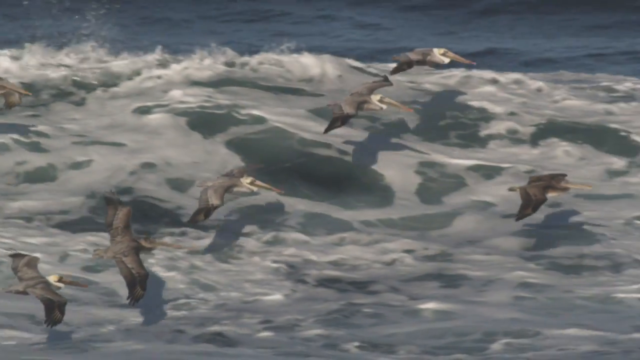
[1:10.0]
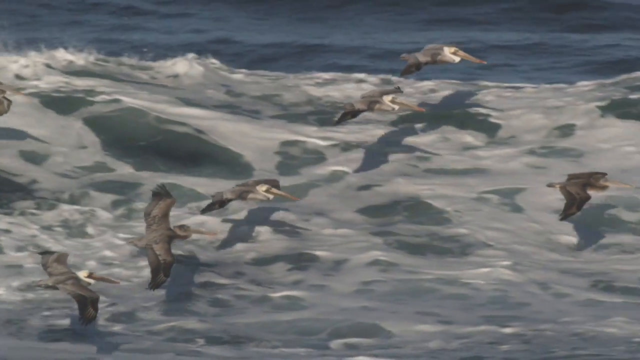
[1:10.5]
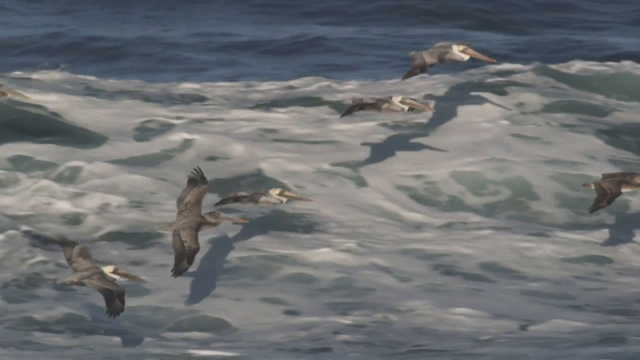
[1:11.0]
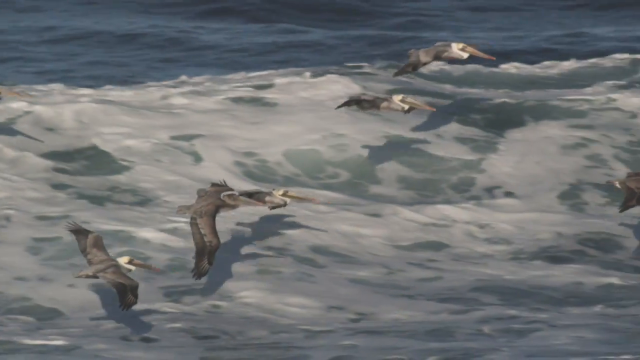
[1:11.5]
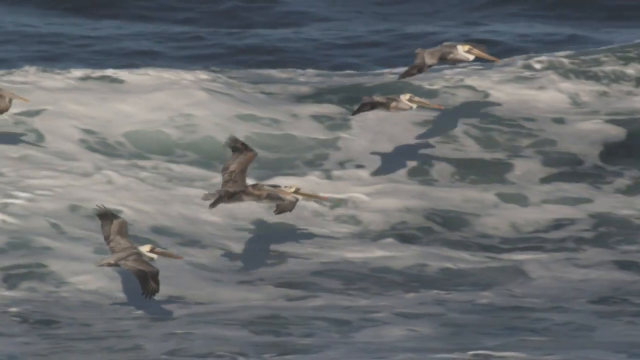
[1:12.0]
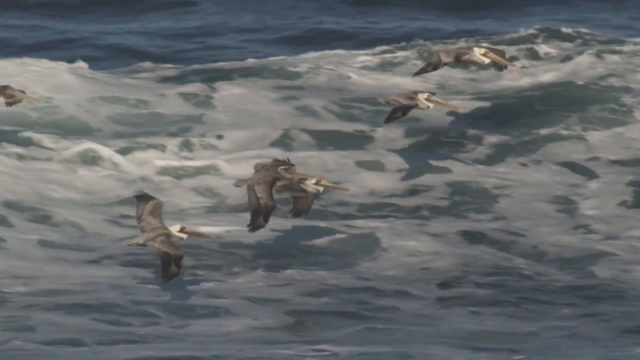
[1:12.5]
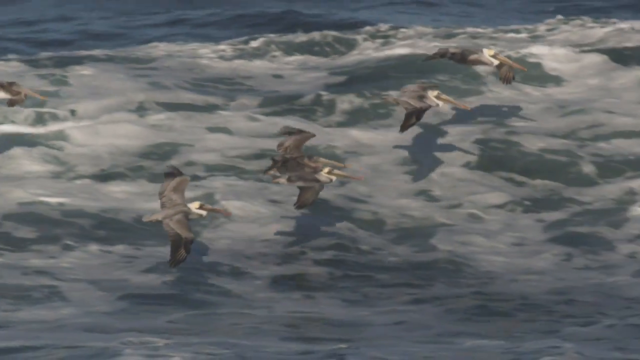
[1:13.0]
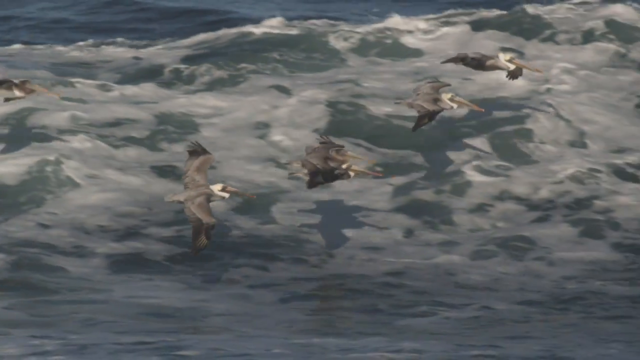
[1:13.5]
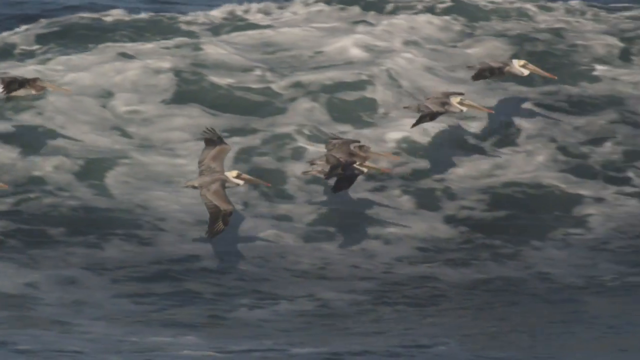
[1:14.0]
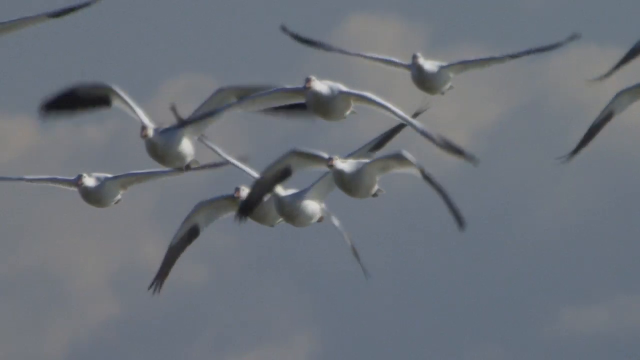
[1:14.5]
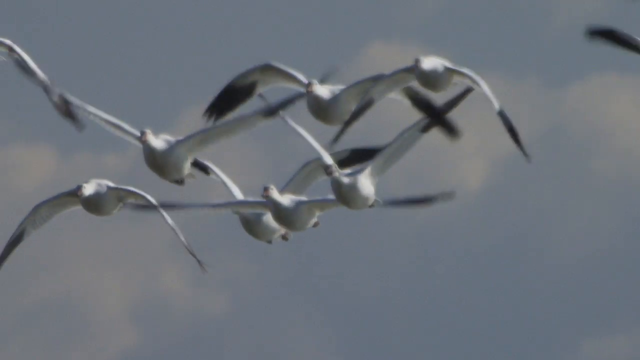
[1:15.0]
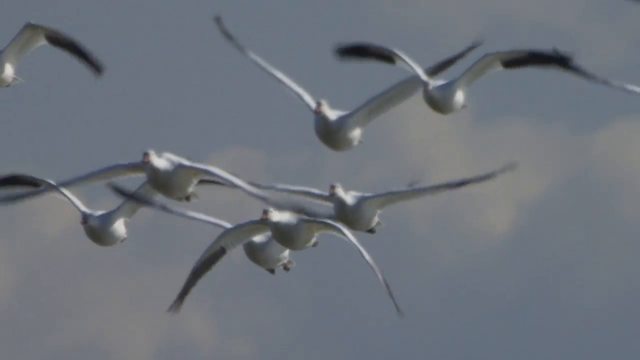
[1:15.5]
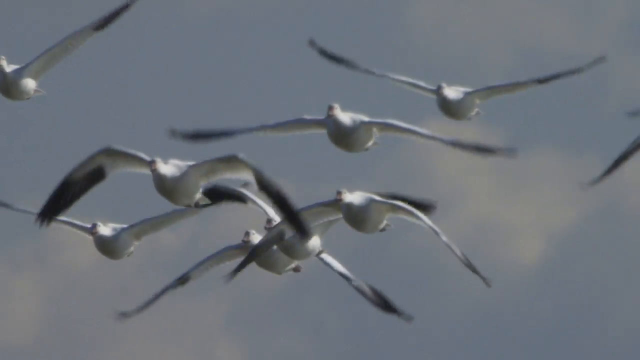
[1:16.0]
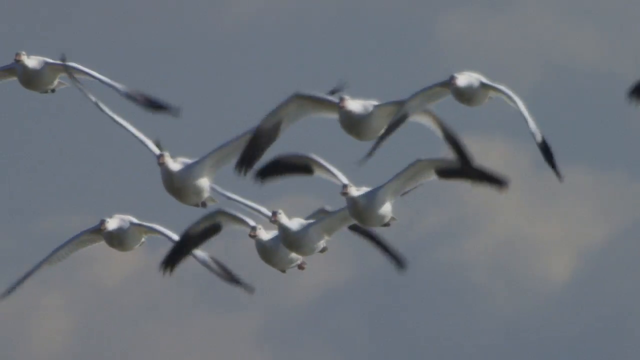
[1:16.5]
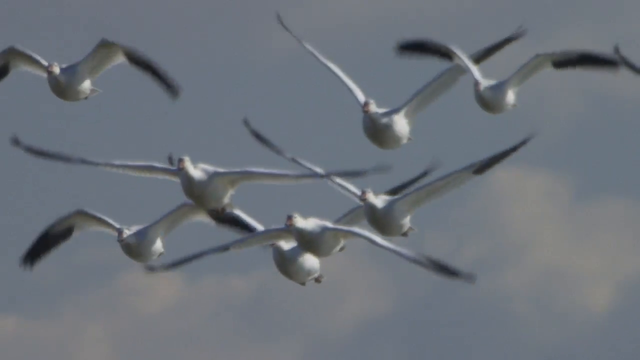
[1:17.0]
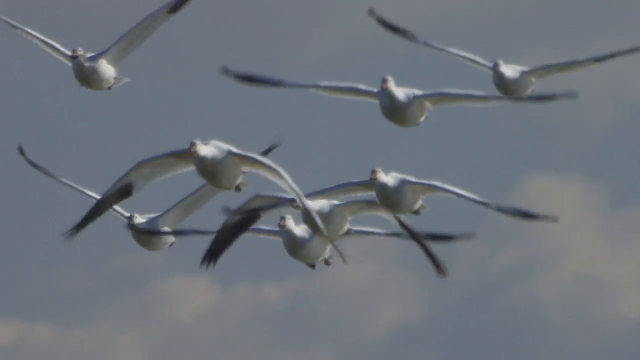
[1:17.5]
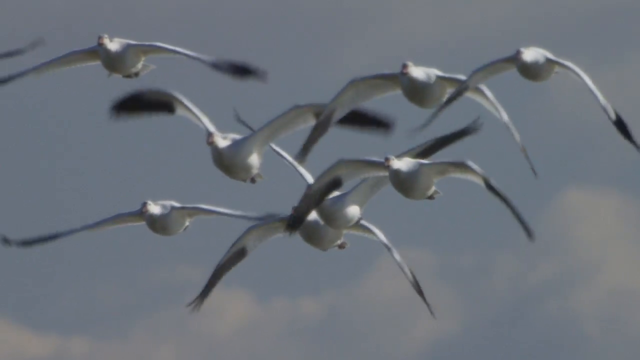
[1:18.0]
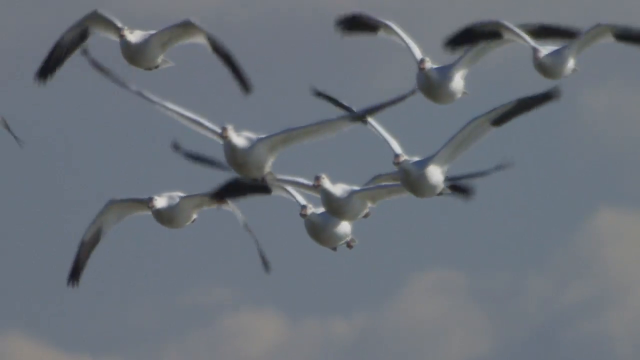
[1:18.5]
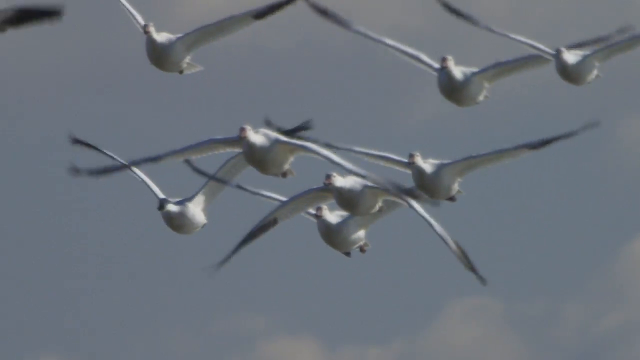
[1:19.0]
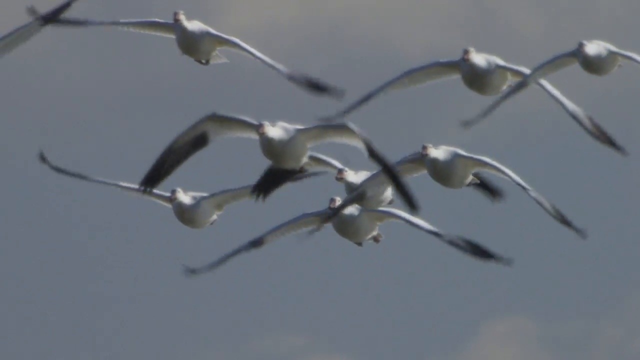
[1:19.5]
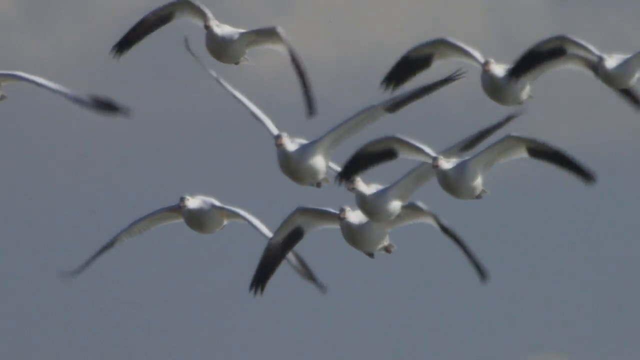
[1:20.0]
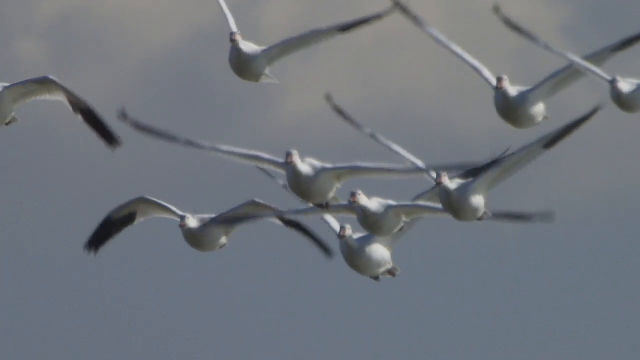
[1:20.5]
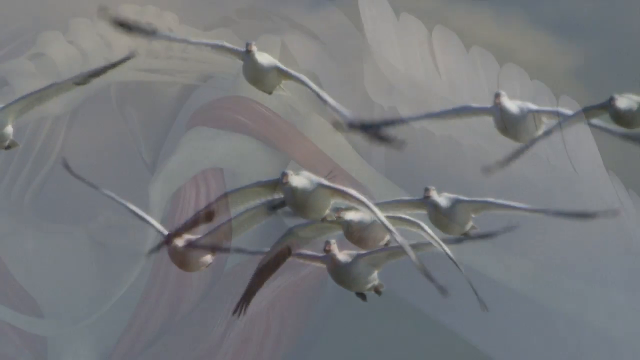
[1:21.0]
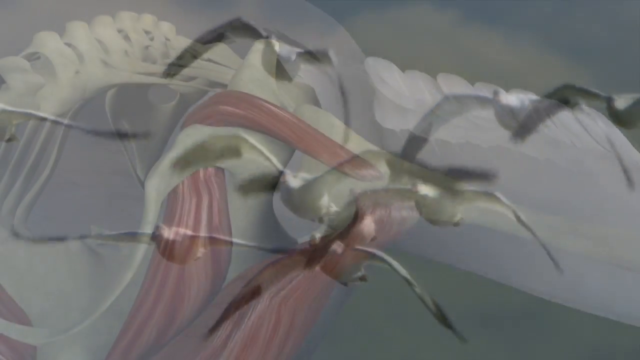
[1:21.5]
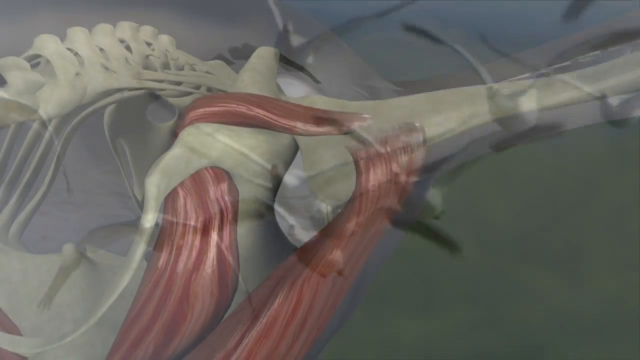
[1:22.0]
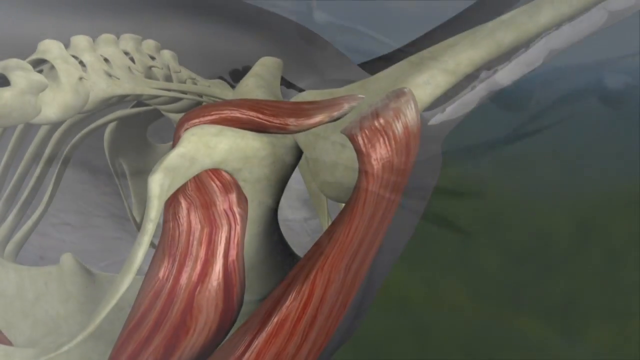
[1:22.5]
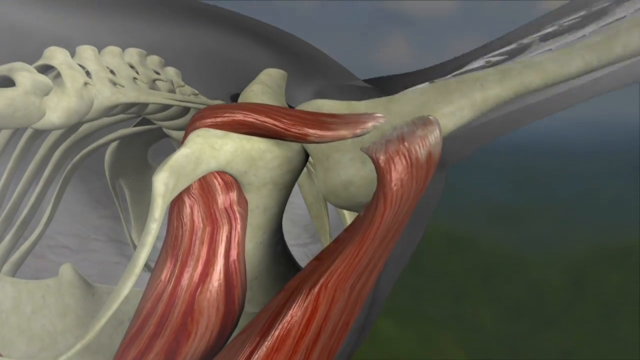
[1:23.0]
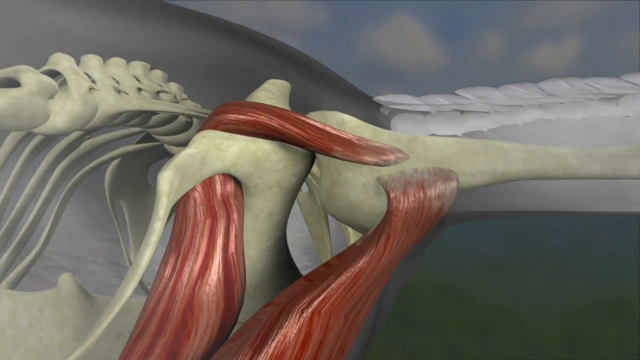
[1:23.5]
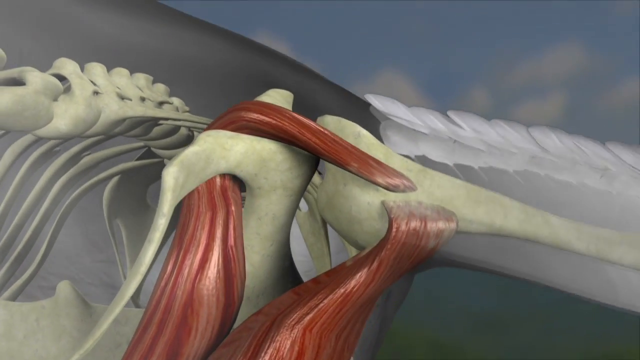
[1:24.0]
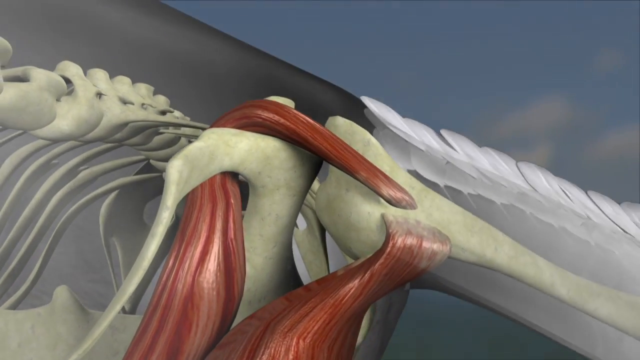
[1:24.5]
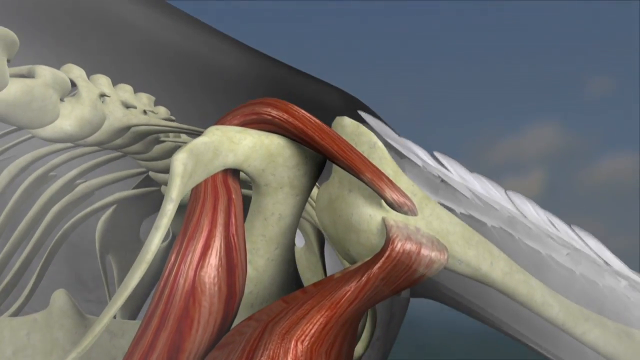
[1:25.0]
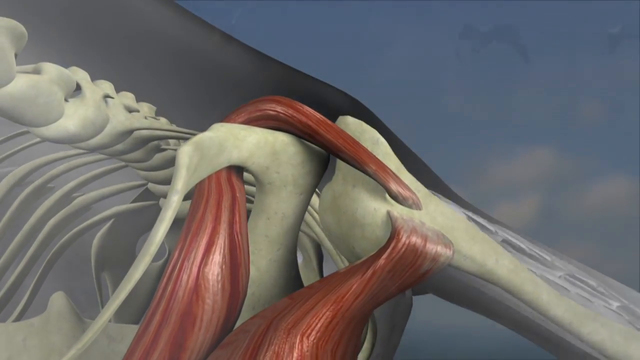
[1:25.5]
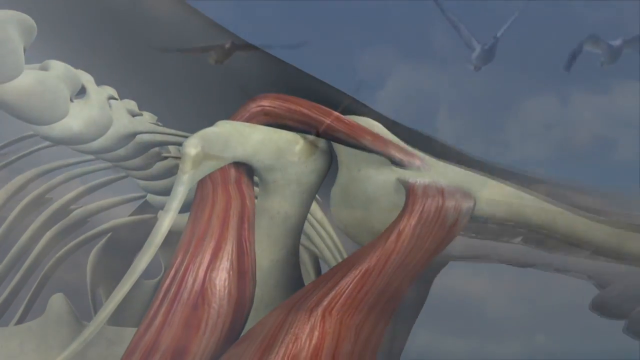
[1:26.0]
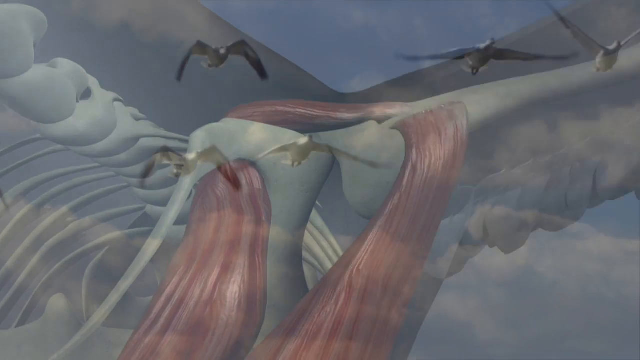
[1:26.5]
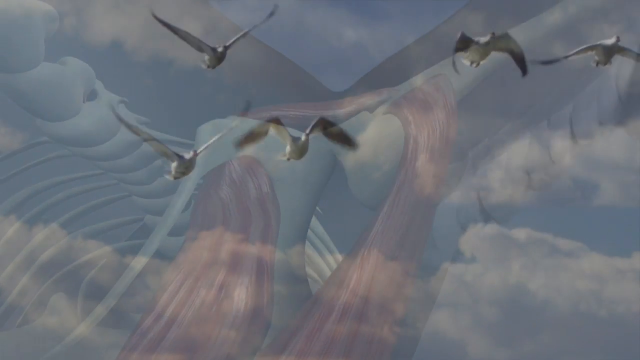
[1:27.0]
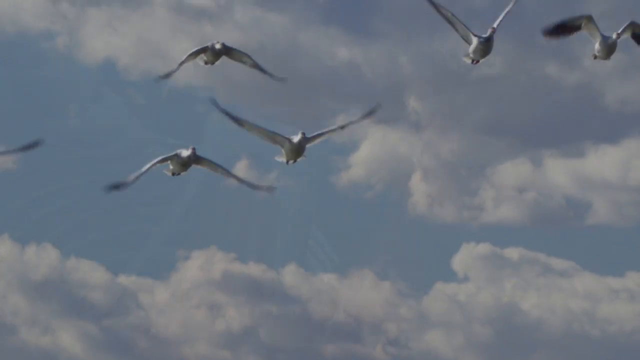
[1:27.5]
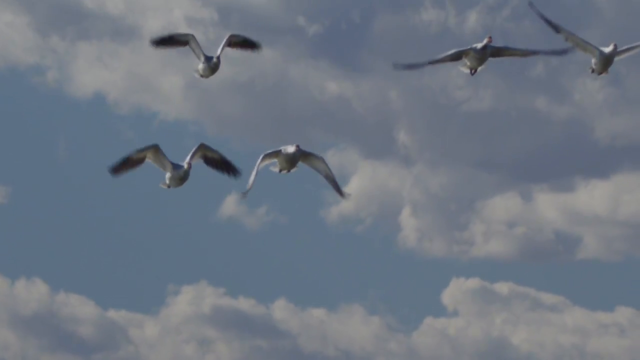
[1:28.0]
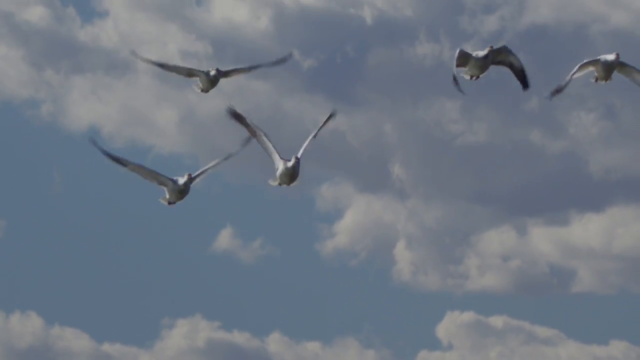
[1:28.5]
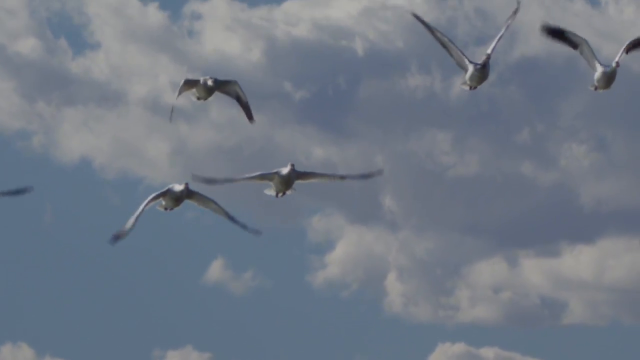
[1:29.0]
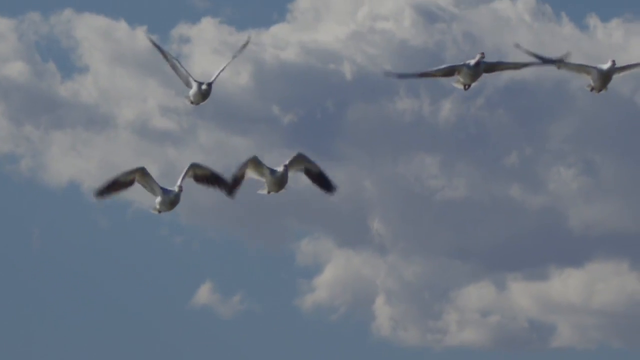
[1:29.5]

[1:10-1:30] What looked like something in the bird's mouth is just its wing behind it. A group of seagulls flies together, flapping their wings and soaring. An inside view shows how wings work, with what appear to be tendons or muscles around the bones that move the wings. The gulls fly against a light blue sky with some white clouds, and the birds fly over the ocean. The seagulls are white with black tips on their wings, the rest of their bodies solid white, and they all seem to fly in sync with each other.